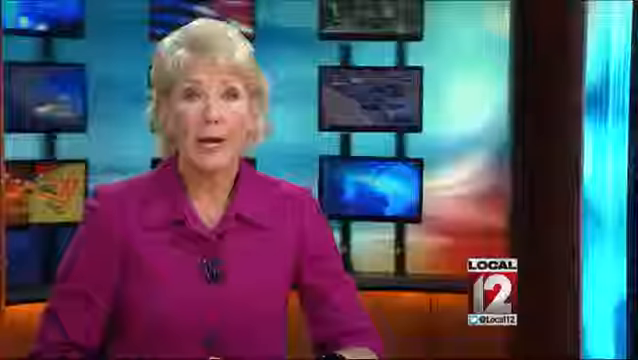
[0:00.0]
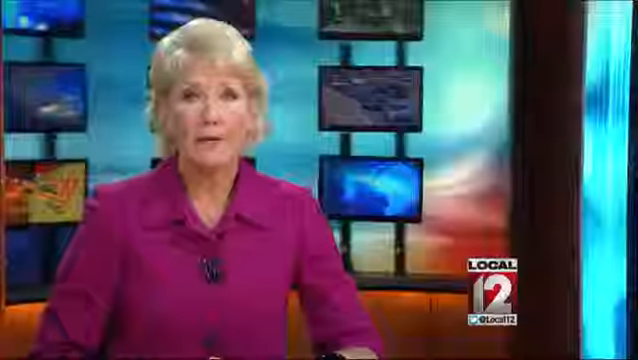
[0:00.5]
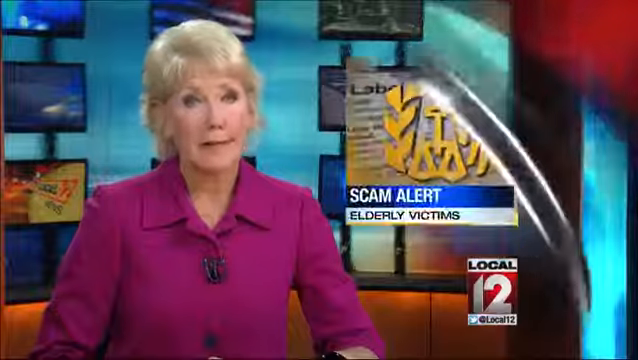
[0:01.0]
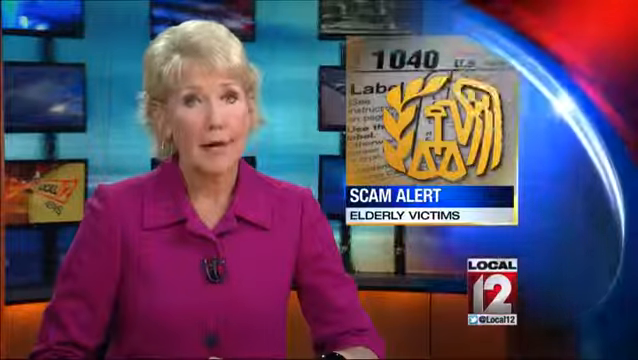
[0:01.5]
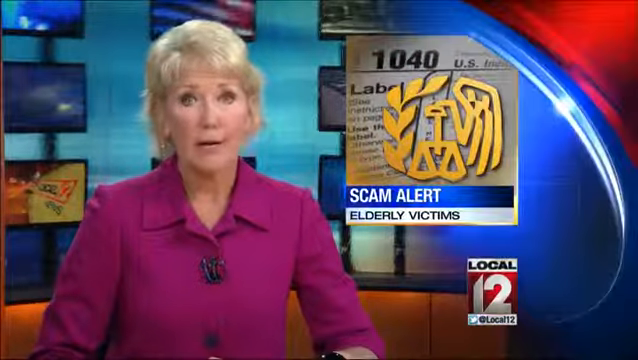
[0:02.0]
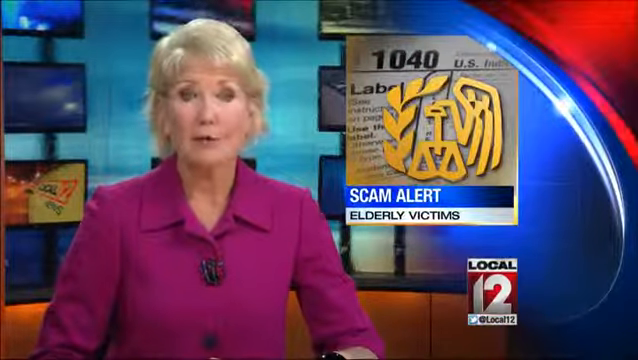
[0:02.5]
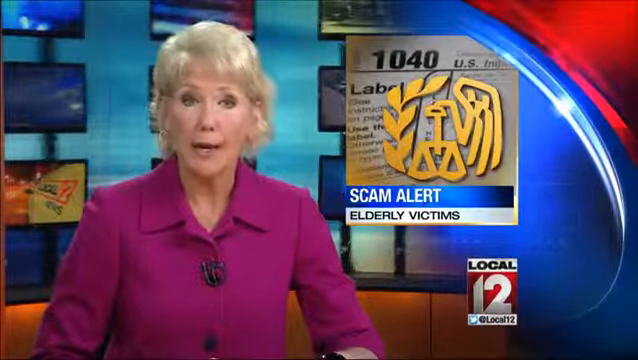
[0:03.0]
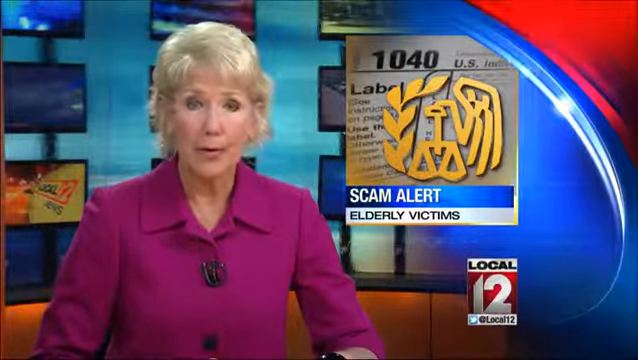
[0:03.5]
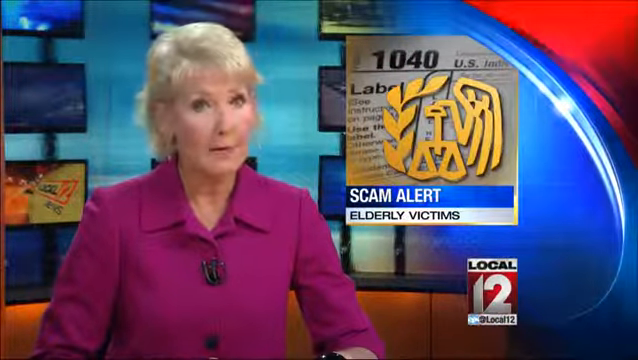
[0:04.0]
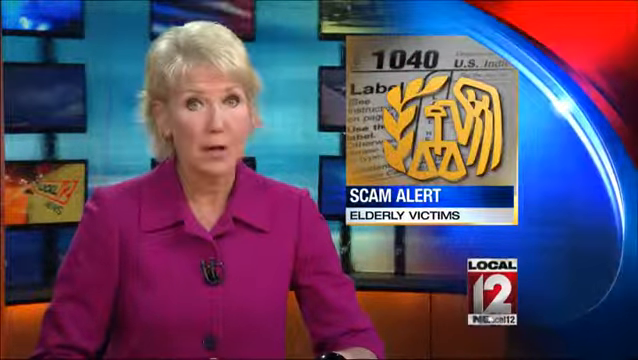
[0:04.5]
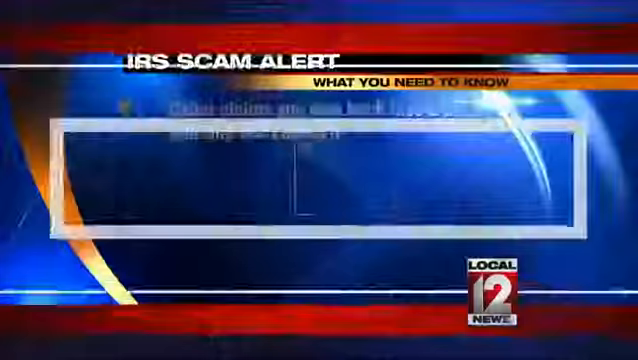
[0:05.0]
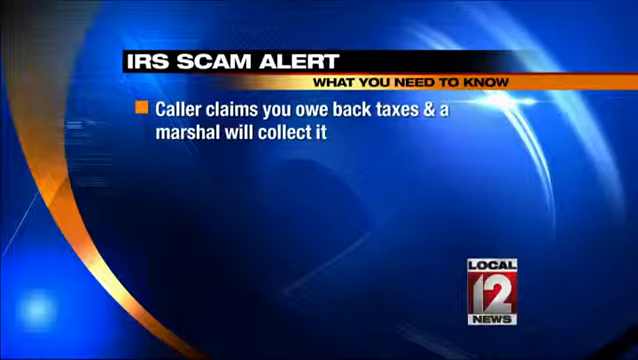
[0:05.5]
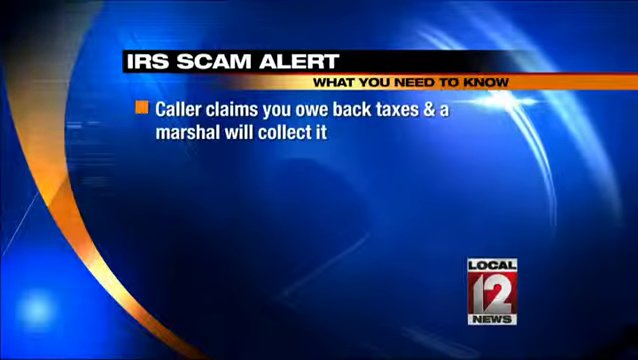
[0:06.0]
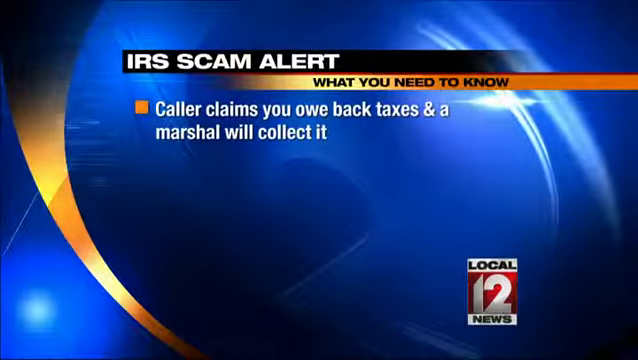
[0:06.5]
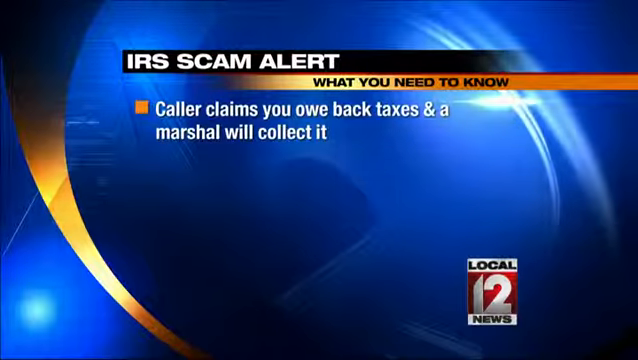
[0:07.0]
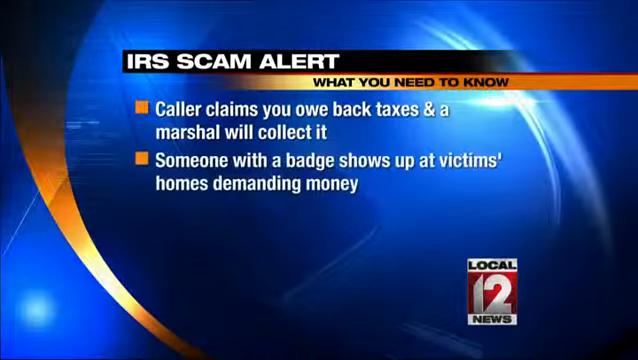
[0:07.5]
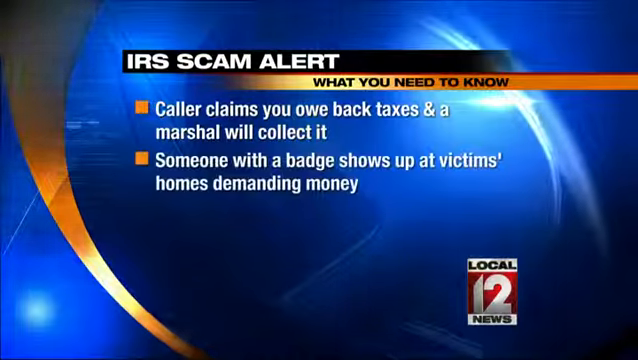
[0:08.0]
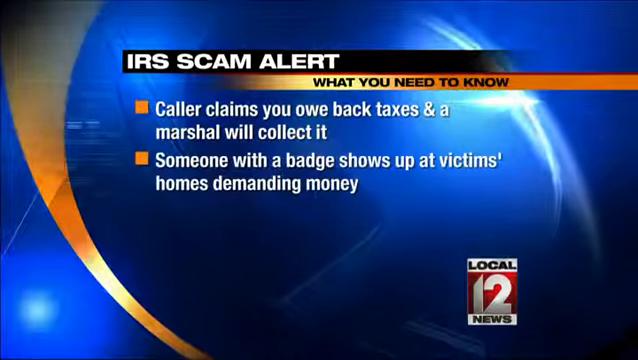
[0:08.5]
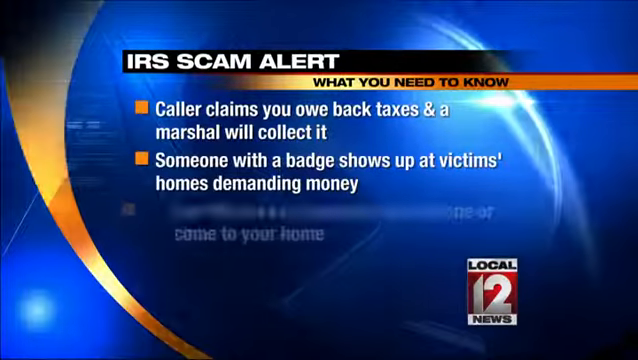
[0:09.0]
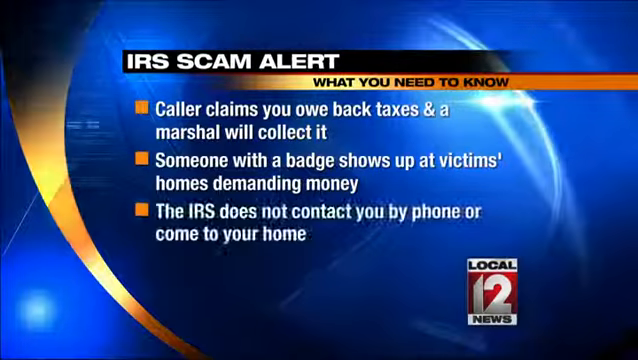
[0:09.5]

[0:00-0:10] A lady reports the news on a TV screen; she is an old lady wearing a pink shirt. On-screen text reads "scam alert elderly victims", "what you need to know" and "caller claims you owe back taxes and a marshal will collect it", followed by "someone with a badge shows up at victims homes demanding money". A sign is visible in the back, though it is not exactly clear. "Local 12" also appears, along with text indicating that the IRS "does not contact you".